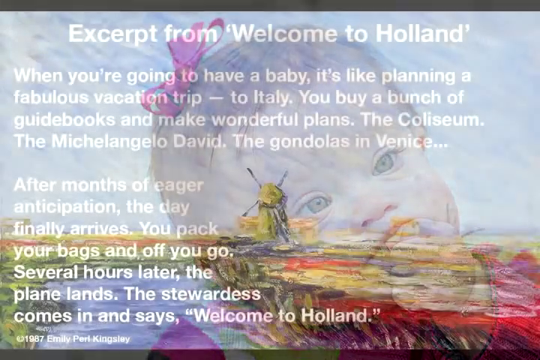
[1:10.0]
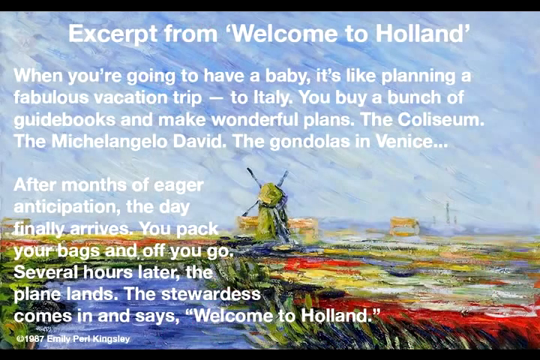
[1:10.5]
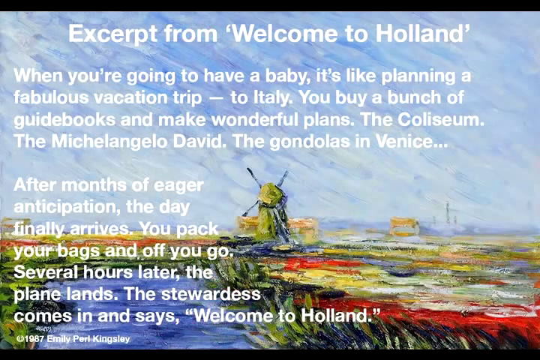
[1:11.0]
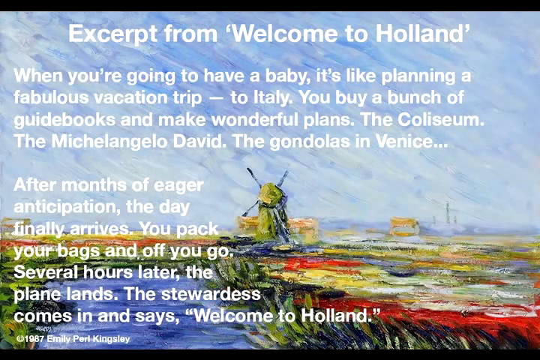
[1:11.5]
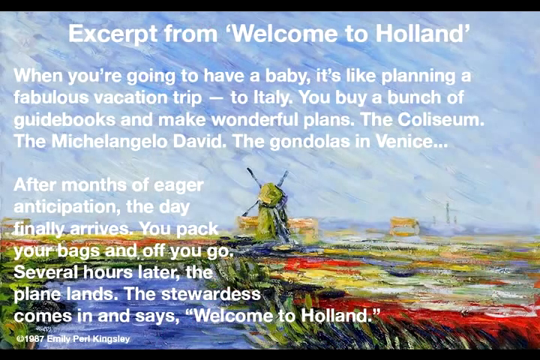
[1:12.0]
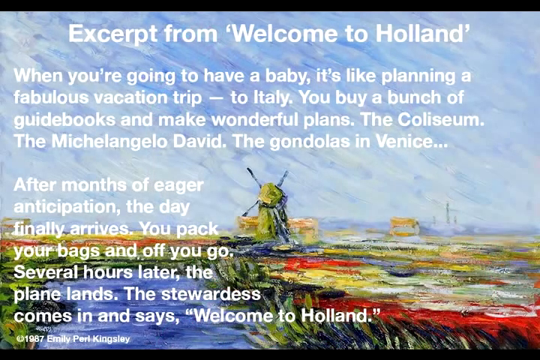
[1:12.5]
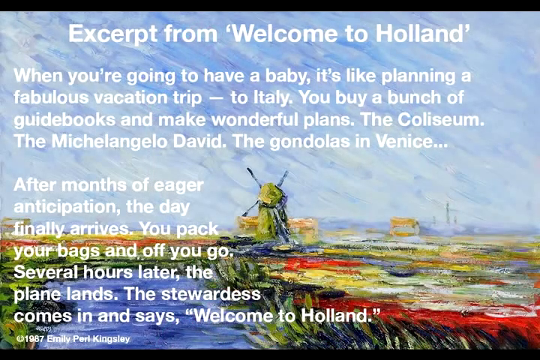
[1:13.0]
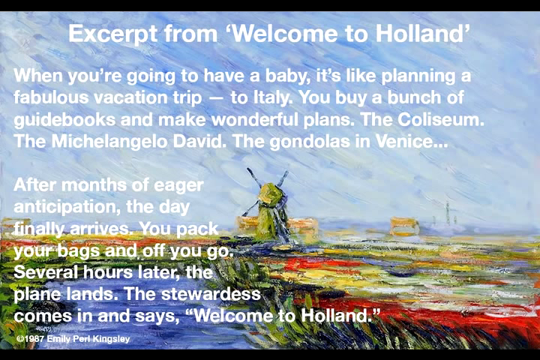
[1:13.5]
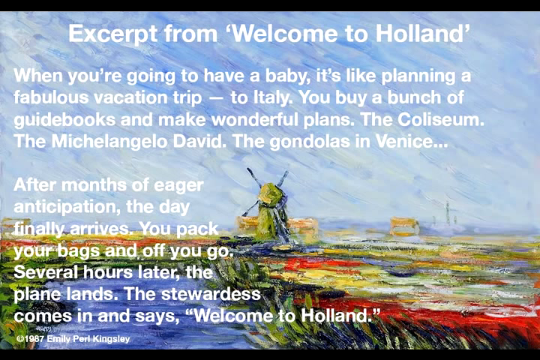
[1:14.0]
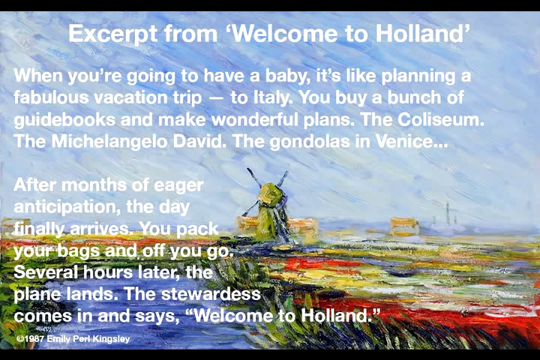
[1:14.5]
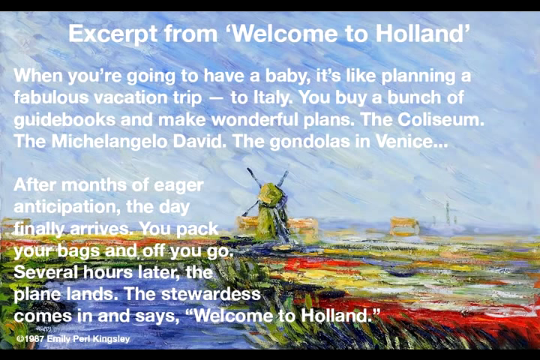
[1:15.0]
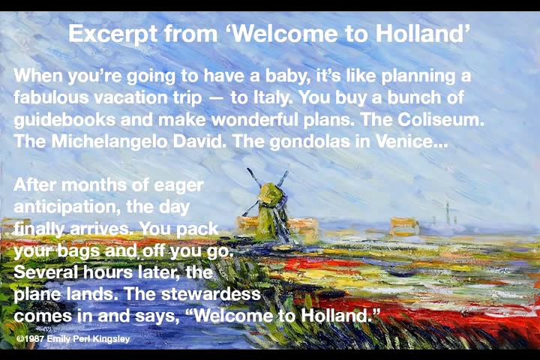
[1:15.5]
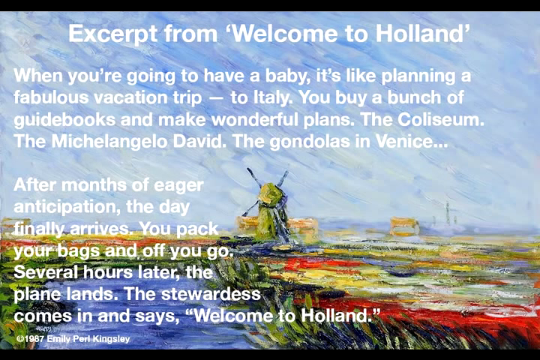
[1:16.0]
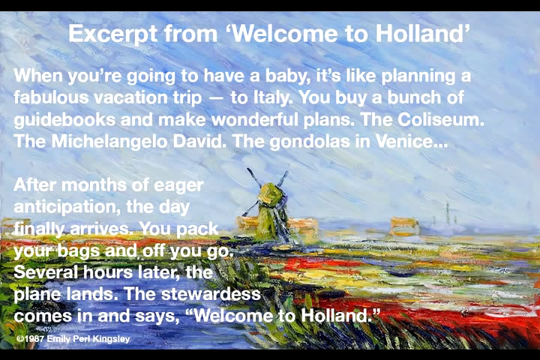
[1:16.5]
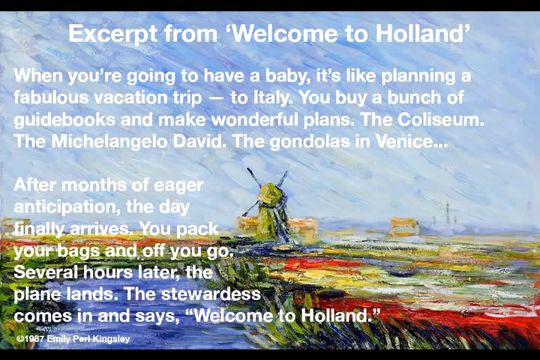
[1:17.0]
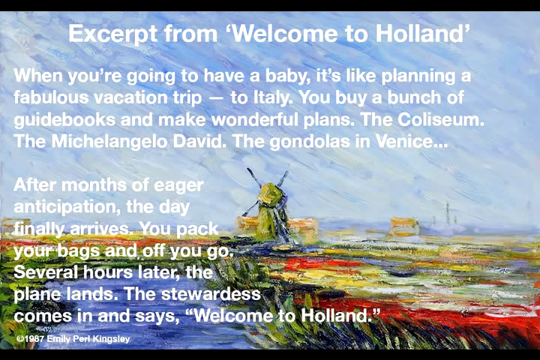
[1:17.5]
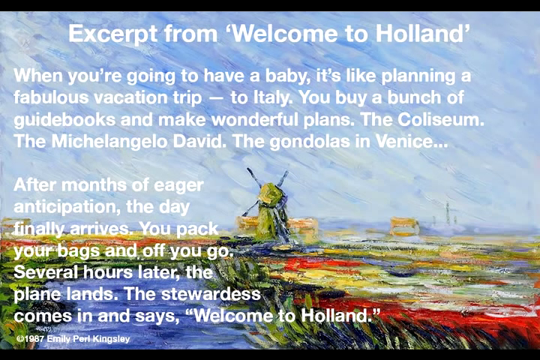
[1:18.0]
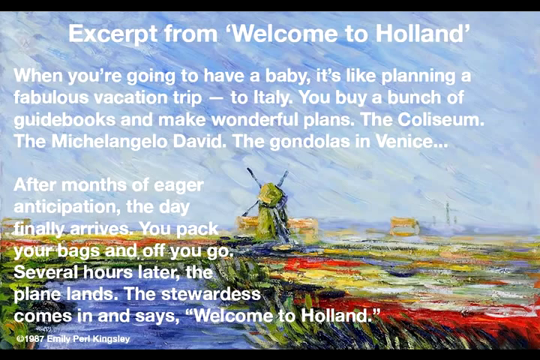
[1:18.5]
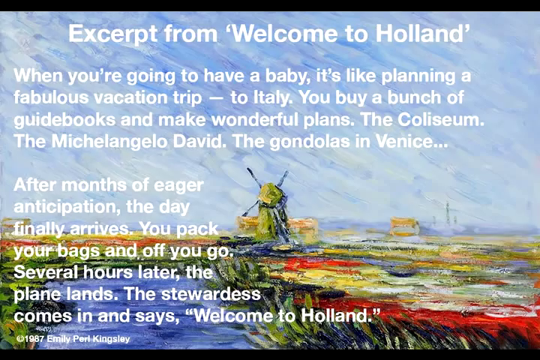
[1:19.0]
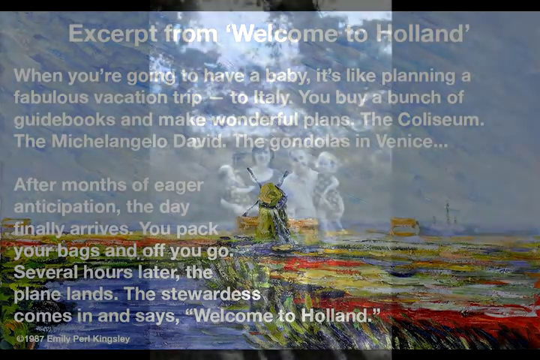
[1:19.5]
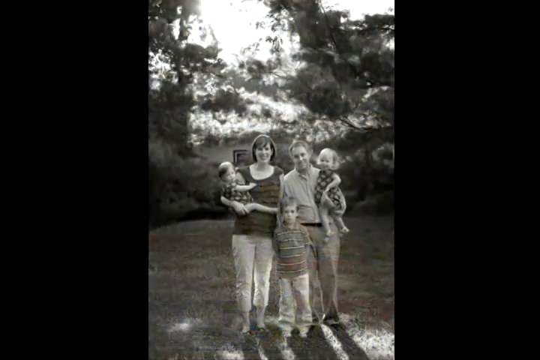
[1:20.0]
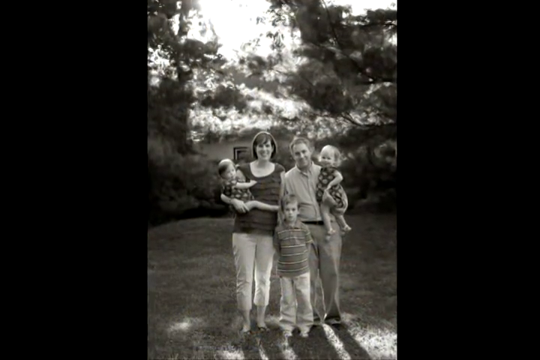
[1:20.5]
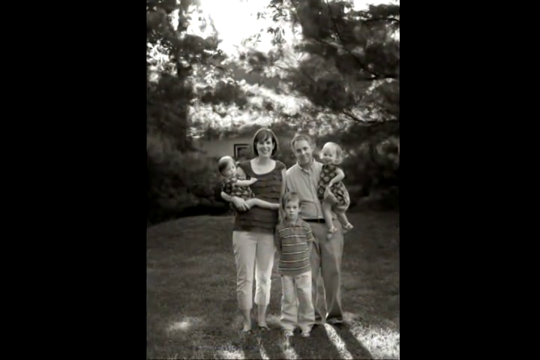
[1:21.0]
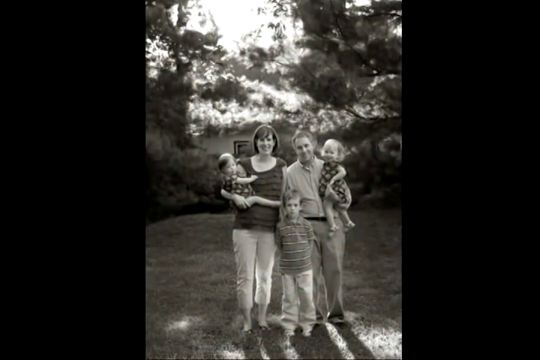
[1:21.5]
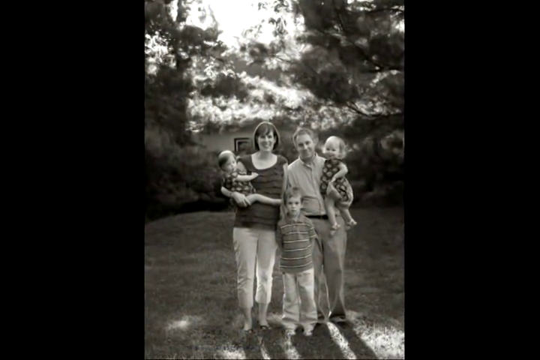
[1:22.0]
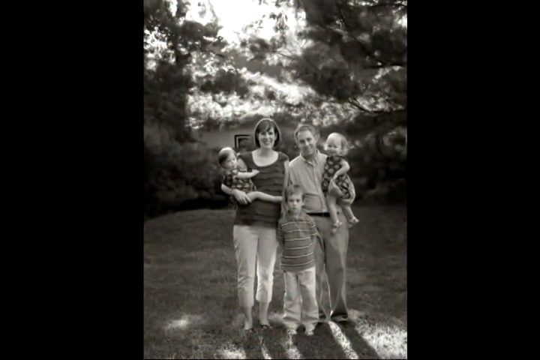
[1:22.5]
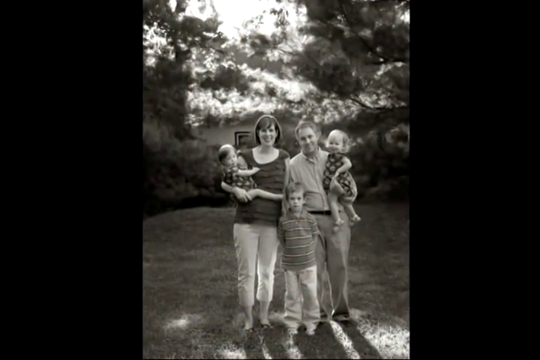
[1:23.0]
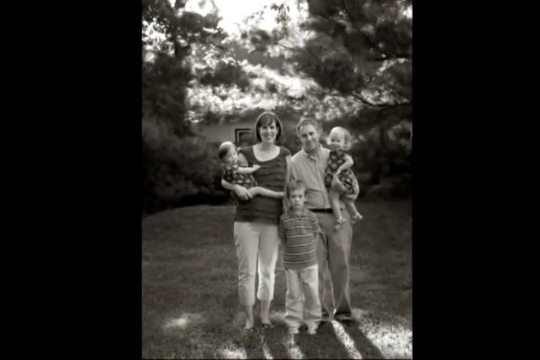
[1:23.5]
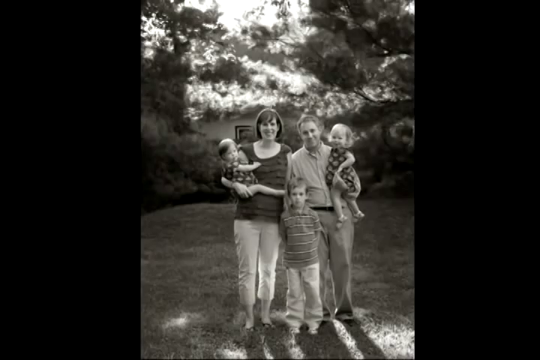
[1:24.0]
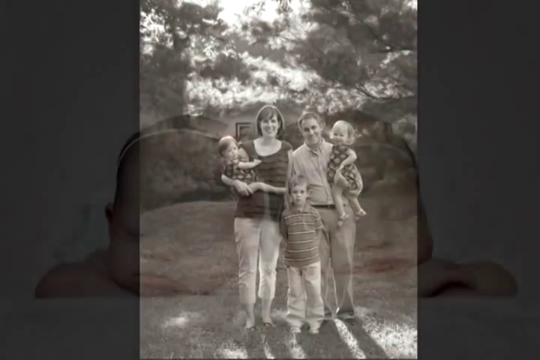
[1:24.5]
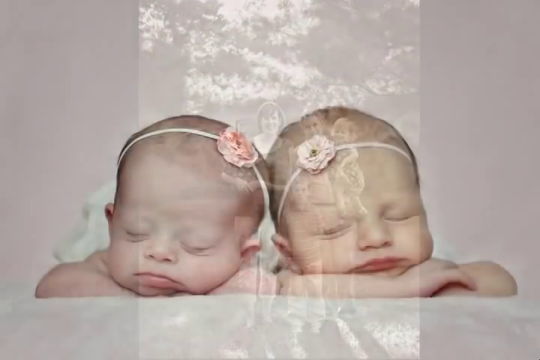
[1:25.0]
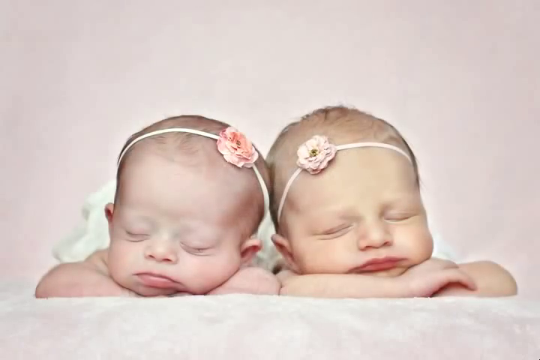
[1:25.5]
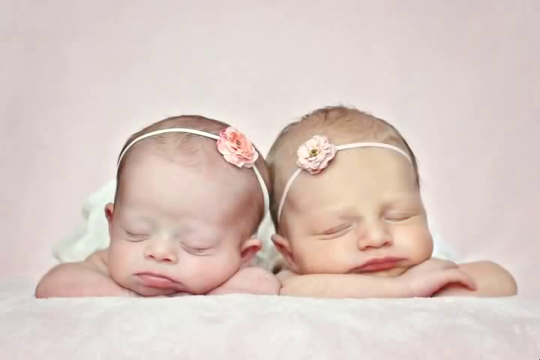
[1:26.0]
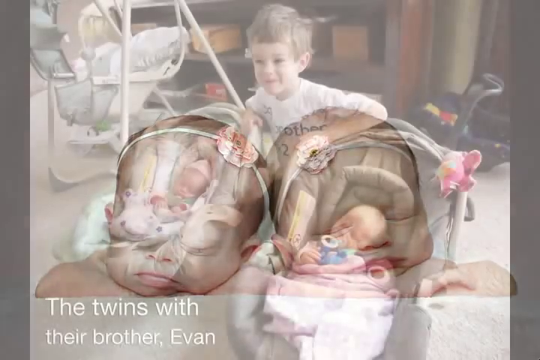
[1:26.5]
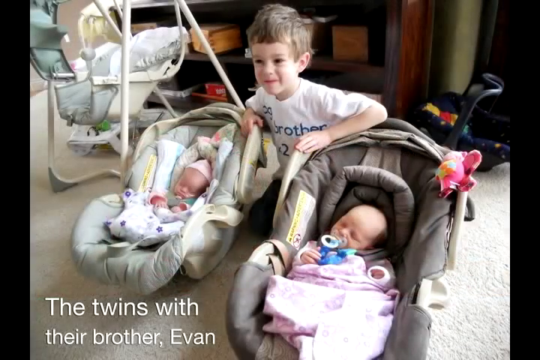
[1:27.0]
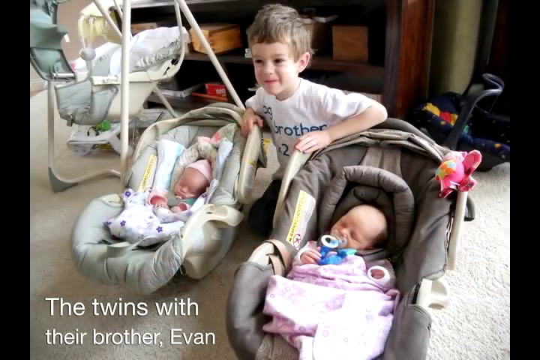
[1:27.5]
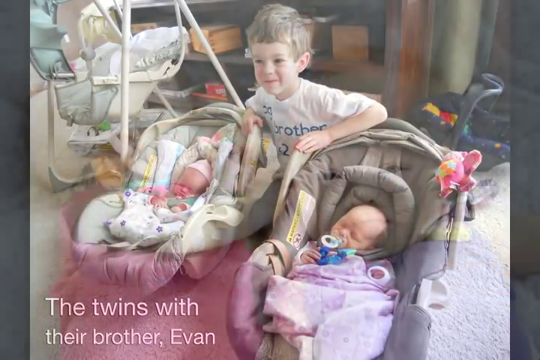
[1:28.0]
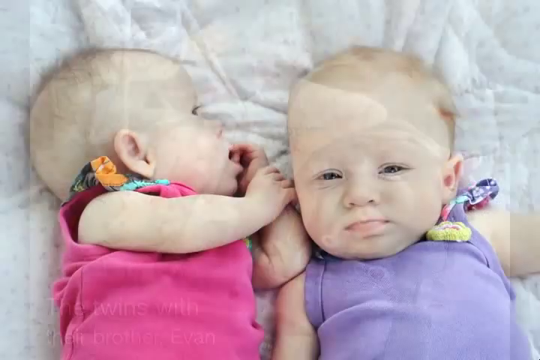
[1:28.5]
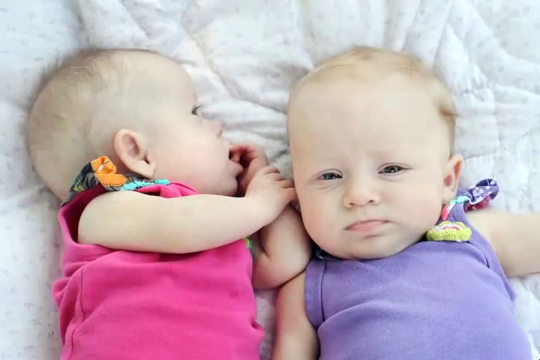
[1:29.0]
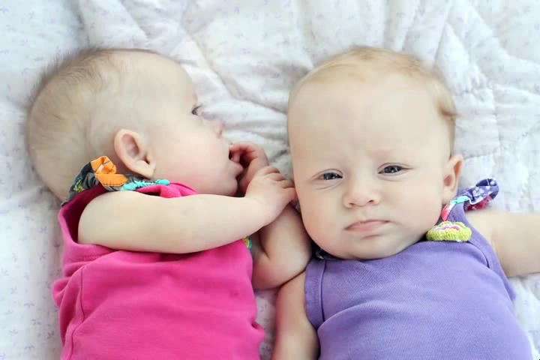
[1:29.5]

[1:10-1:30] Nora's face is visible along with a background of something else, and on top, in white letters, the text reads: "excerpt from Welcome to Holland. When you're going to have a baby, it's like planning a fabulous vacation trip to Italy. You buy a bunch of guidebooks and make wonderful plans. The Coliseum, the Michelangelo David, the gondolas in Venice. After months of eager anticipation, the day finally arrives. You pack your bags and off you go. Several hours later, the plane lands. The stewardess comes in and says, welcome to Holland." A picture of Holland with a windmill in the background is shown. A black and white picture of the whole family follows: the mother, the father, Nora, her sister Katie, and an older brother standing in the middle. Next, Katie and Nora appear together with little pink bows in their hair shortly after being born. Another picture shows the brother with the babies in their little carrier seats, both twins sleeping, with a swing in the back. The big brother wears a white t-shirt that says "big brother times two," and text at the bottom reads "the twins with their brother Evan."